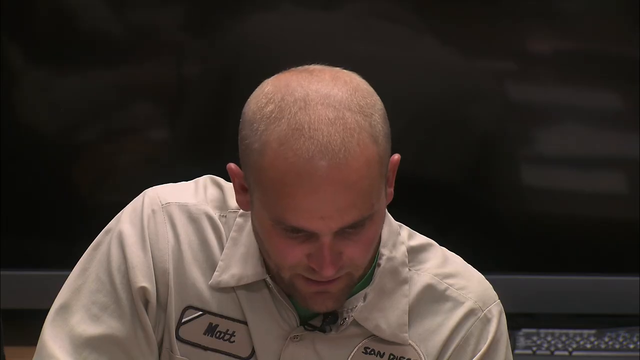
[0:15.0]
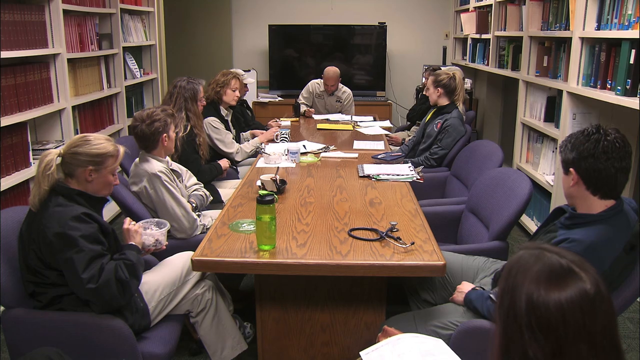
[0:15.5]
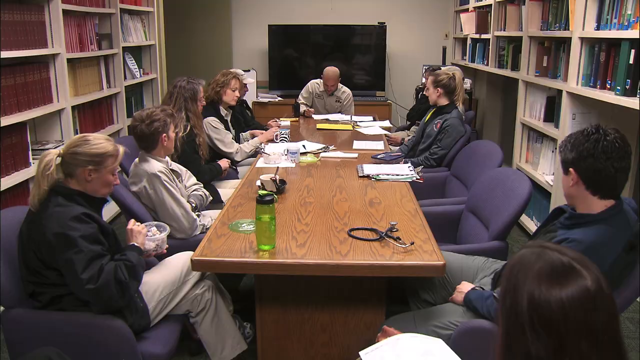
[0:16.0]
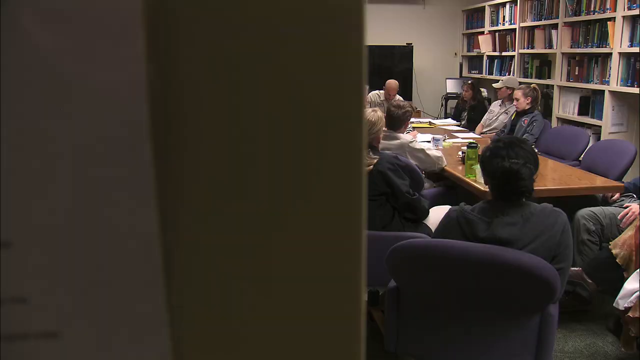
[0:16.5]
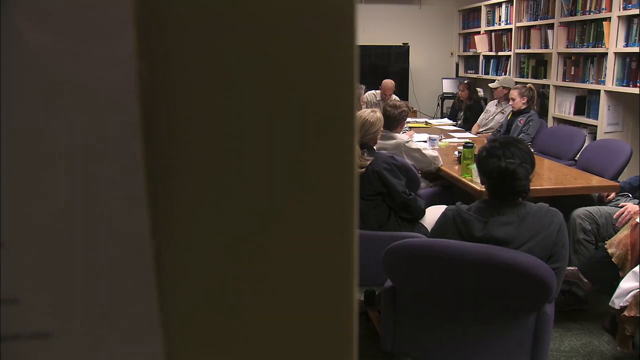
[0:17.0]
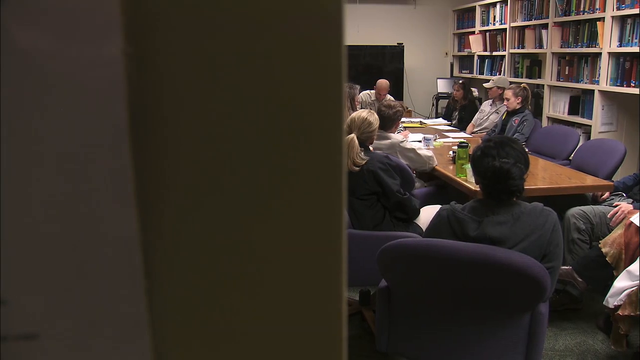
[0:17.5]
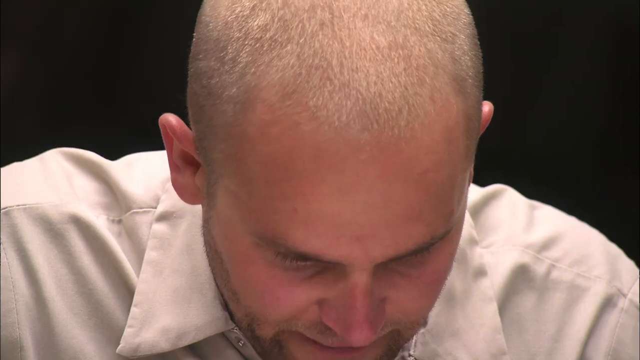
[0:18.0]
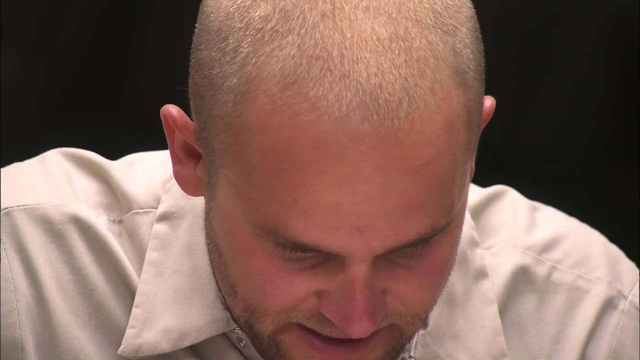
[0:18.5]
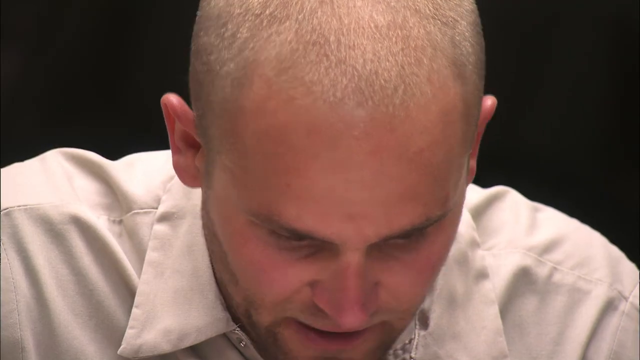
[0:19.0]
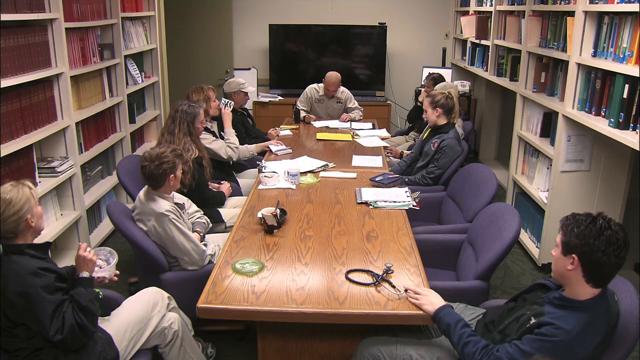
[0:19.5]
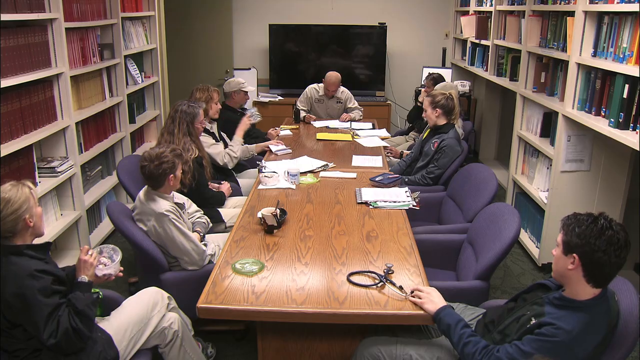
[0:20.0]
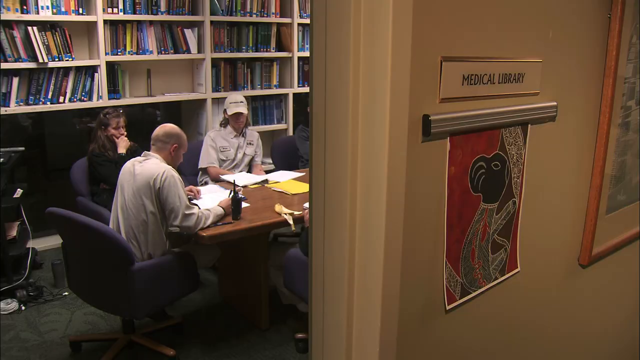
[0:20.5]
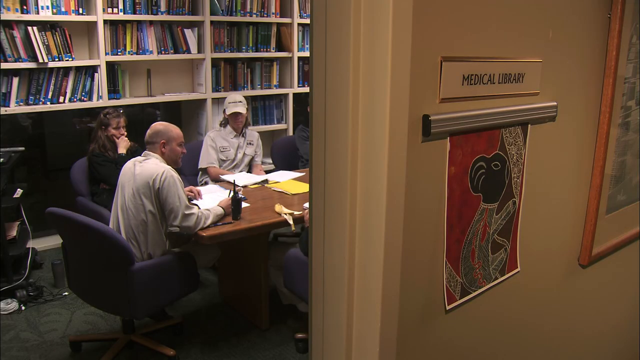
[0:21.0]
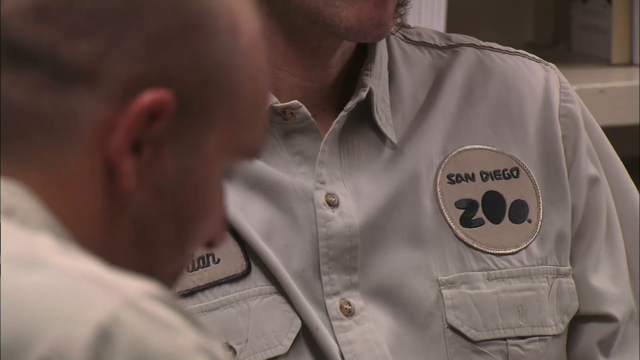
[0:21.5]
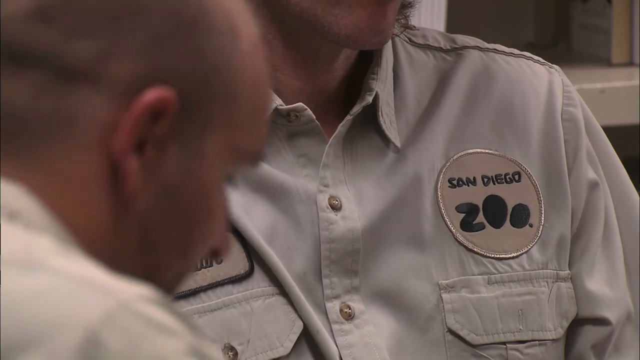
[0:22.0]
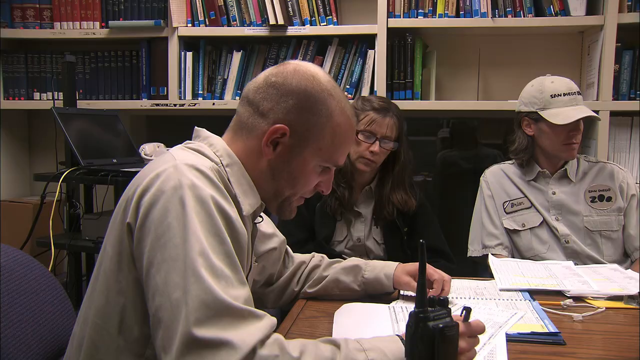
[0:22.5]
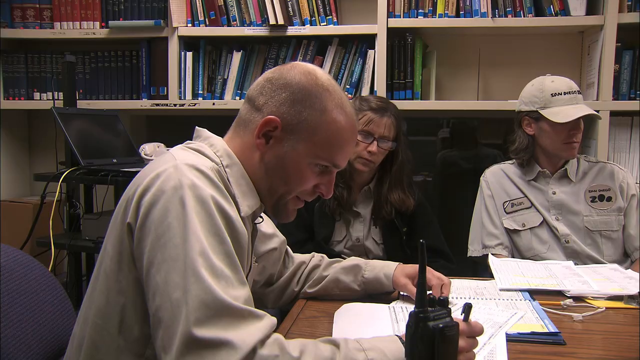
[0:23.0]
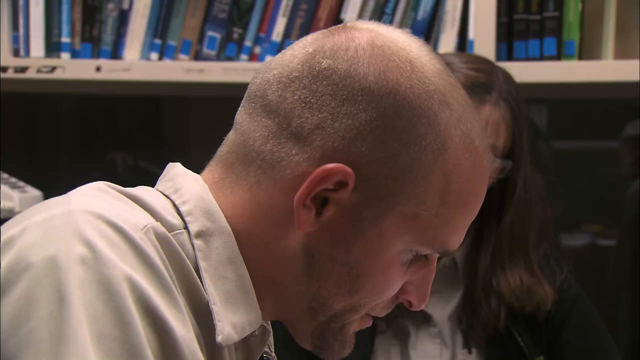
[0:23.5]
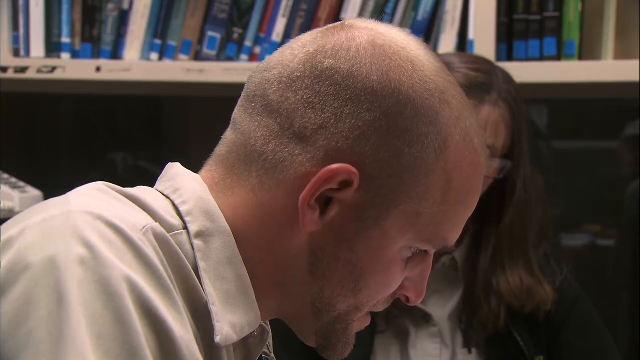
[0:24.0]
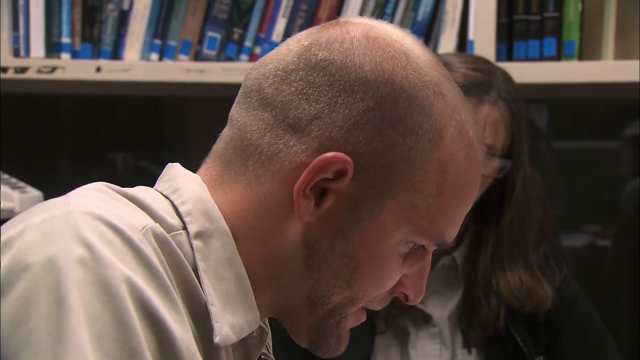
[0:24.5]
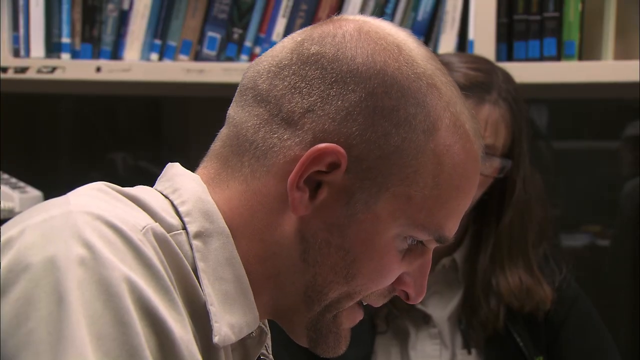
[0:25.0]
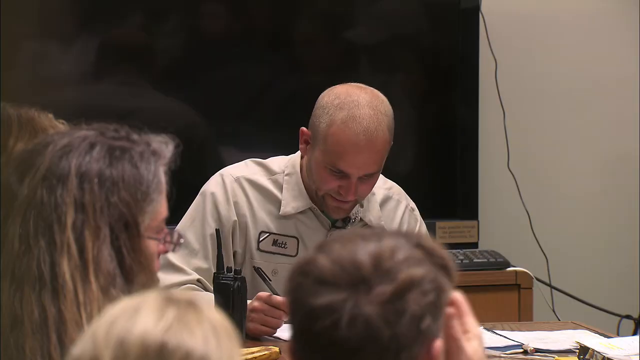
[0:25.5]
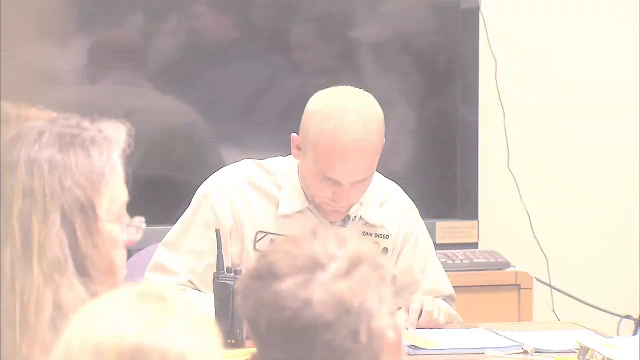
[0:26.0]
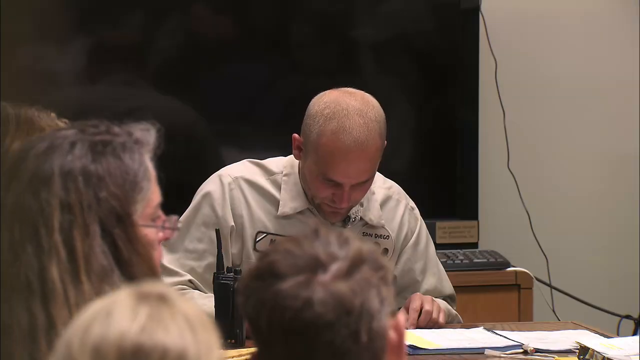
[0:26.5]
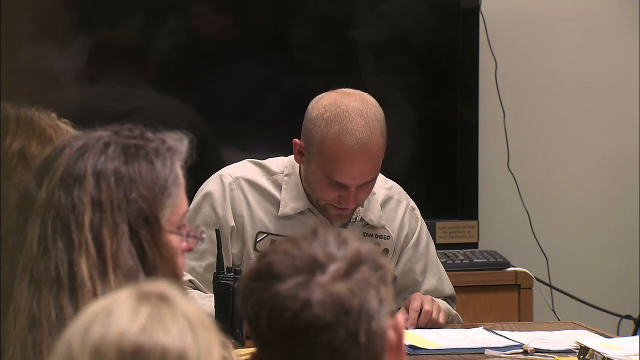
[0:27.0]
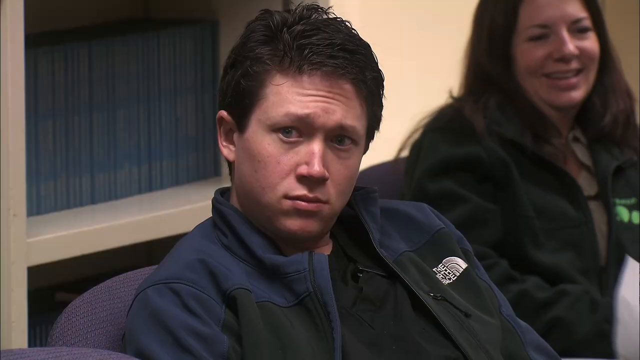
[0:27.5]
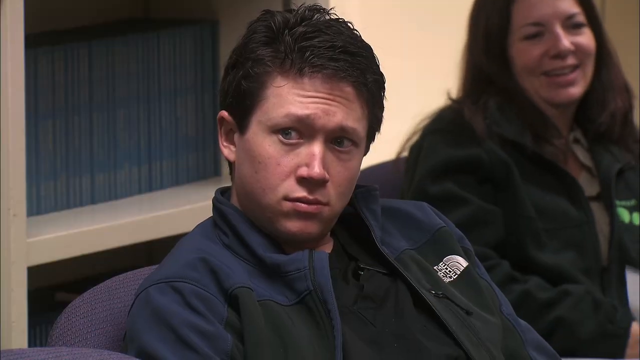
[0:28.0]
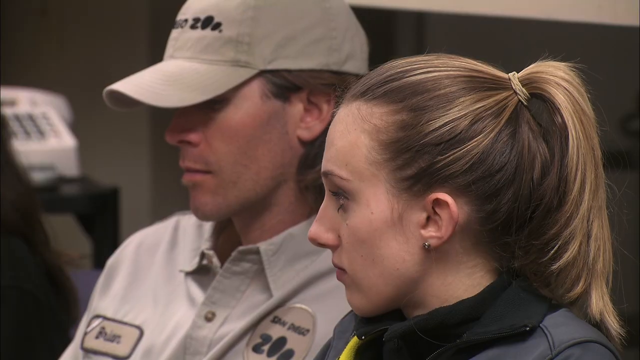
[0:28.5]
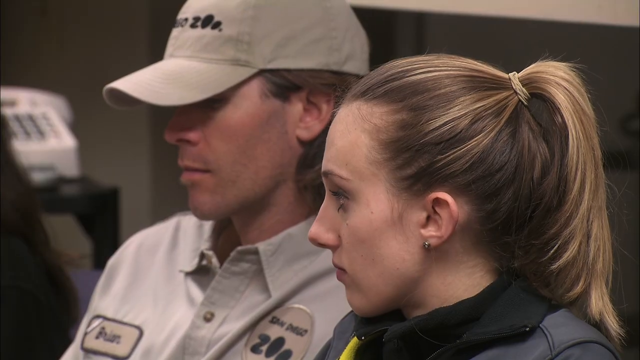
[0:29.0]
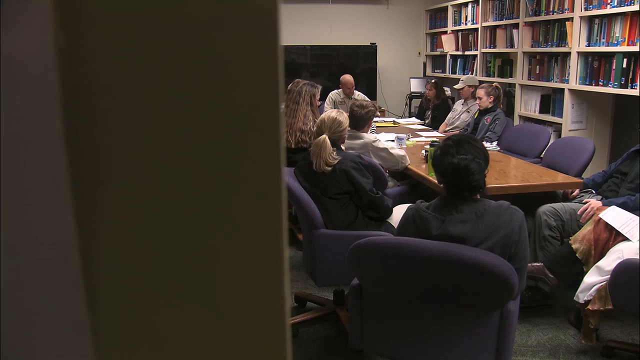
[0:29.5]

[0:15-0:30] A group of people at the zoo sits around a table, apparently in the medical library, since a sign outside the door says so. Books on the bookshelf are probably medical books for animals. A San Diego Zoo patch is visible on one of the workers; they are most likely San Diego Zoo veterinarians. One man at the head of the table is talking, most likely about issues affecting the animals. They all have paperwork and sit in chairs around the table, most likely going over what needs to be done to help various animals at the zoo.